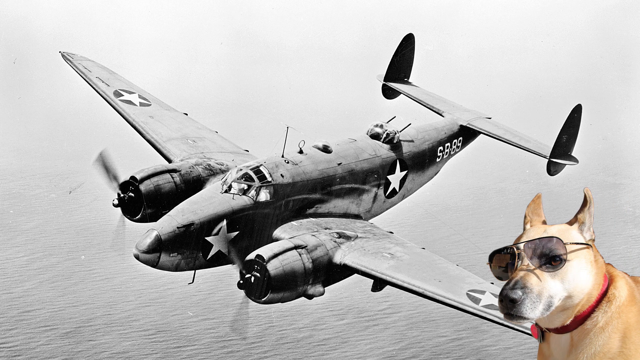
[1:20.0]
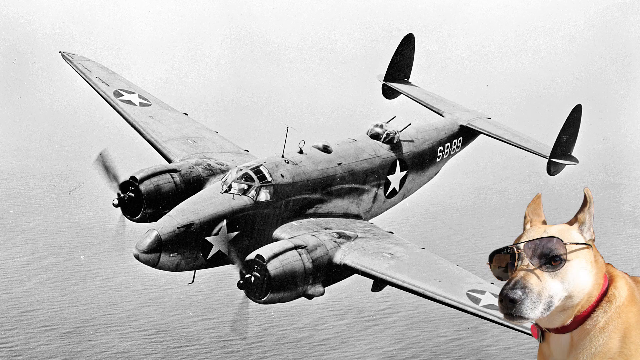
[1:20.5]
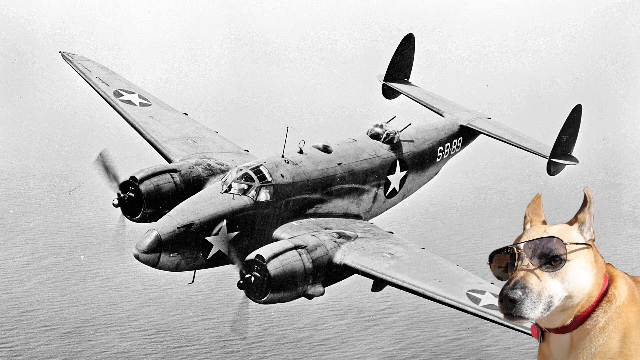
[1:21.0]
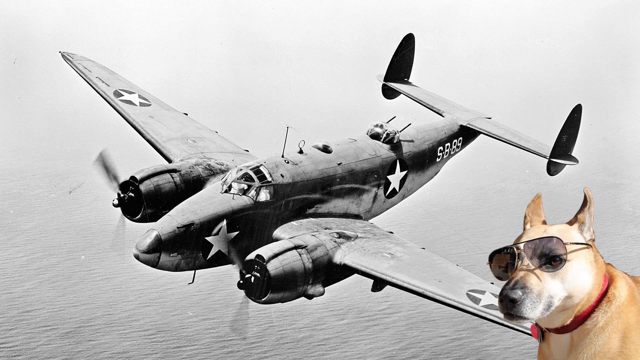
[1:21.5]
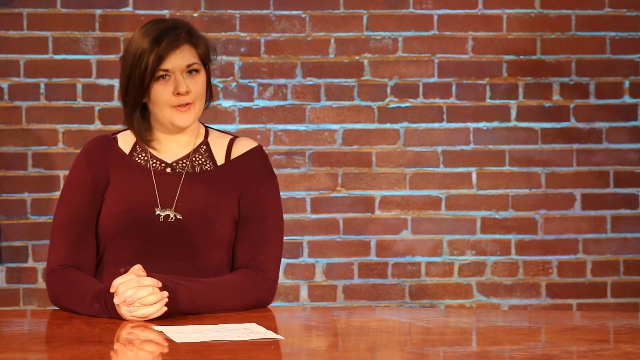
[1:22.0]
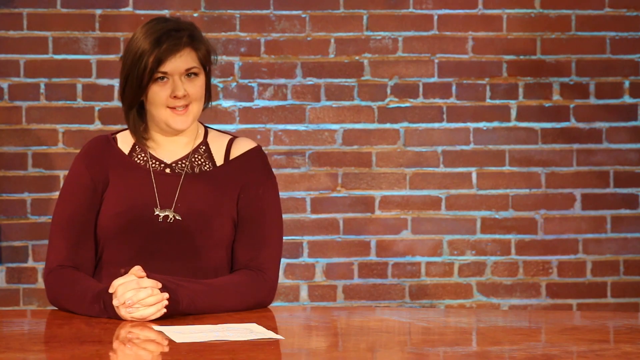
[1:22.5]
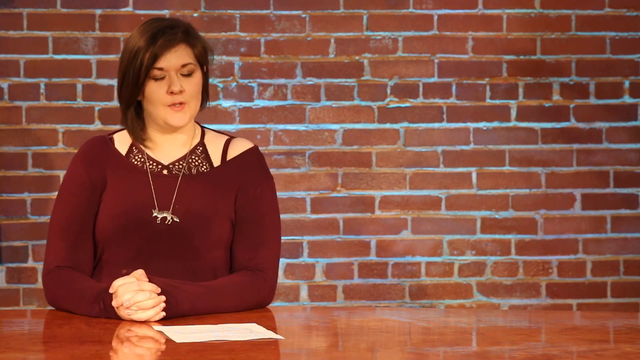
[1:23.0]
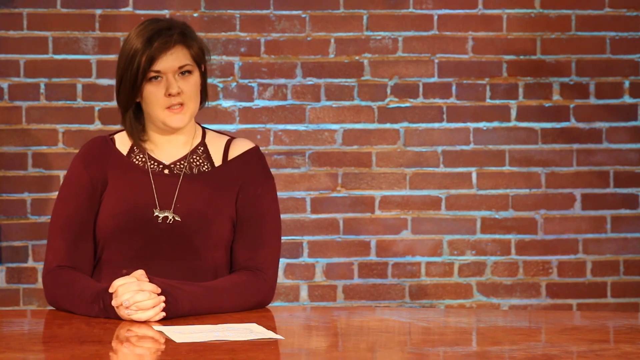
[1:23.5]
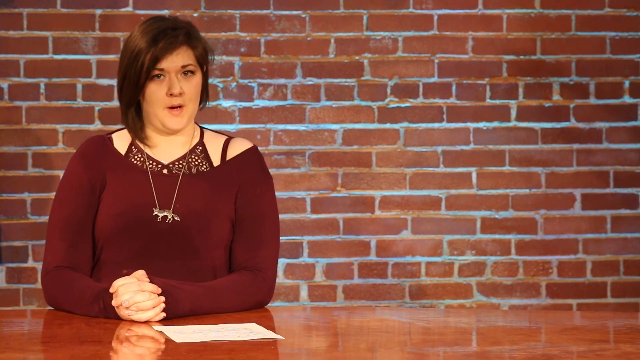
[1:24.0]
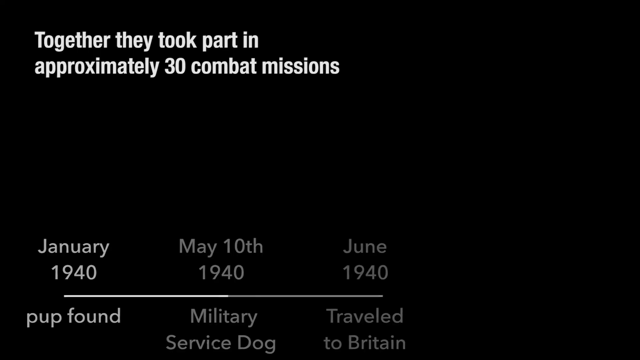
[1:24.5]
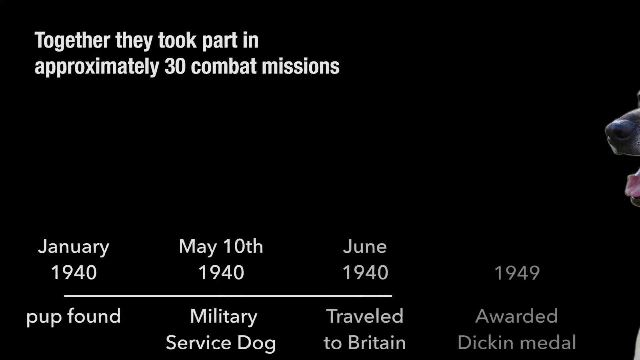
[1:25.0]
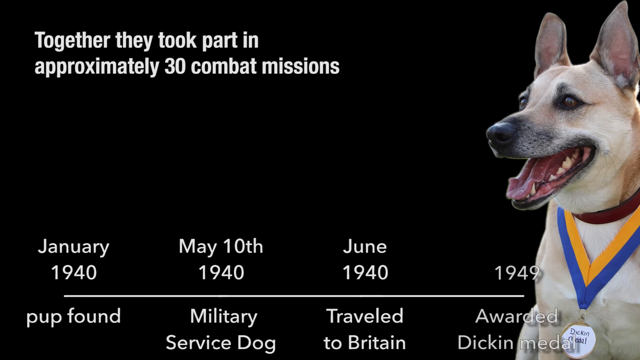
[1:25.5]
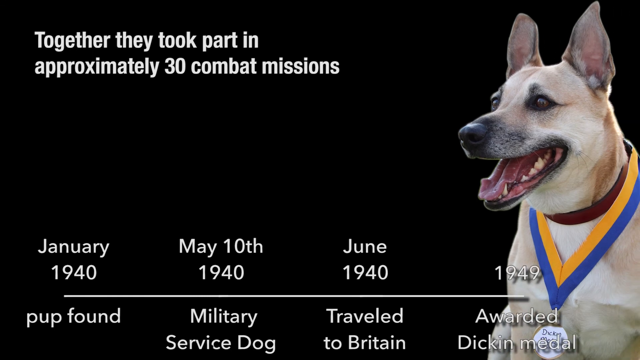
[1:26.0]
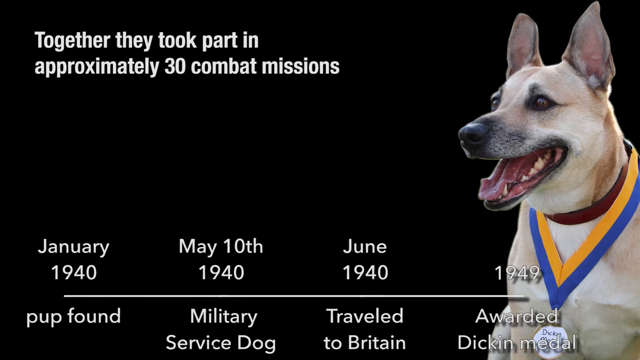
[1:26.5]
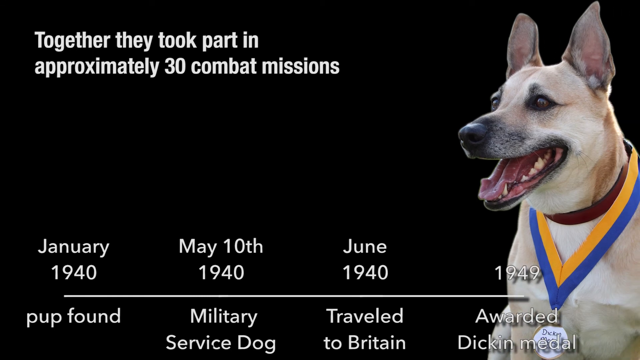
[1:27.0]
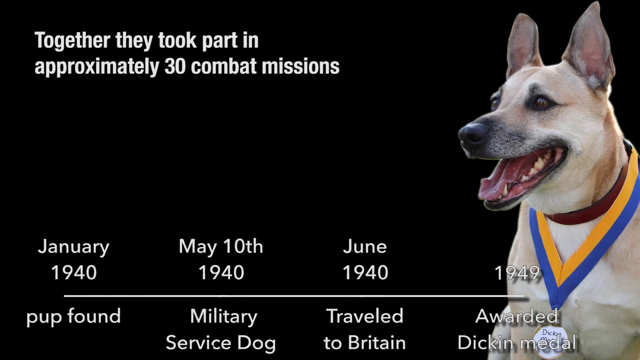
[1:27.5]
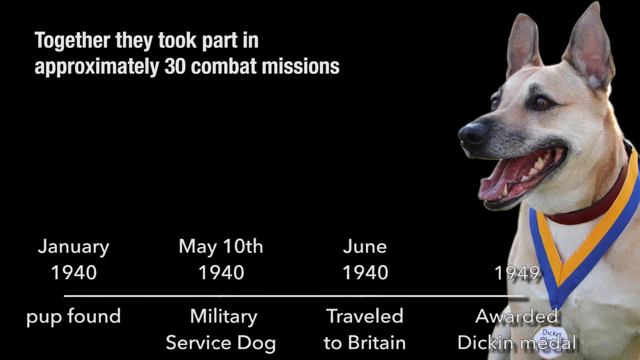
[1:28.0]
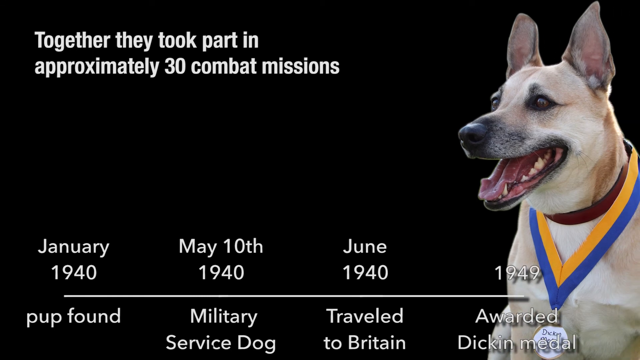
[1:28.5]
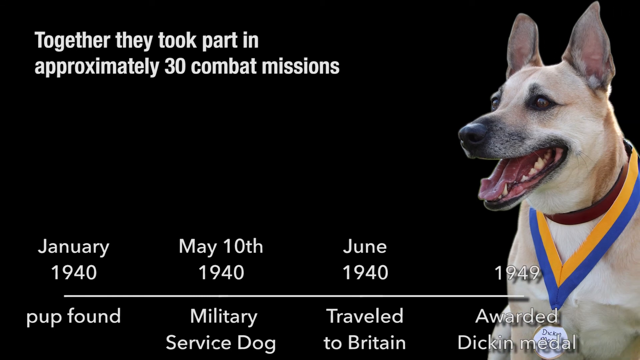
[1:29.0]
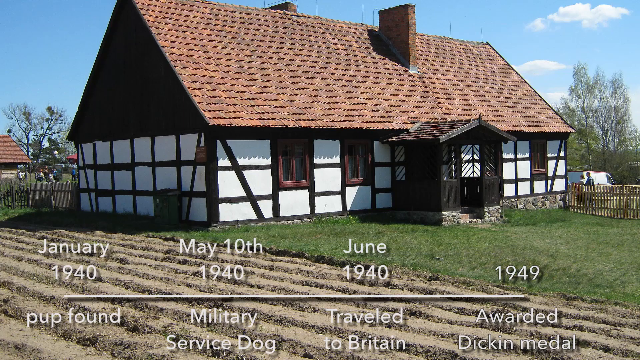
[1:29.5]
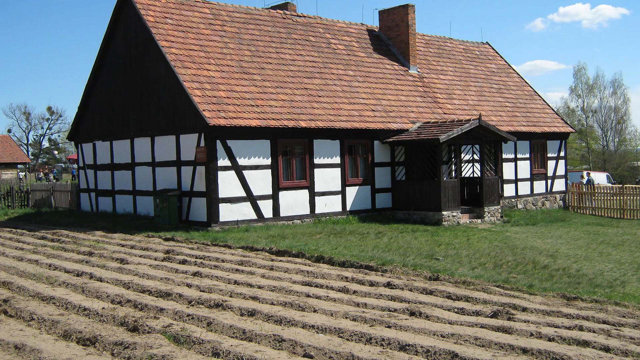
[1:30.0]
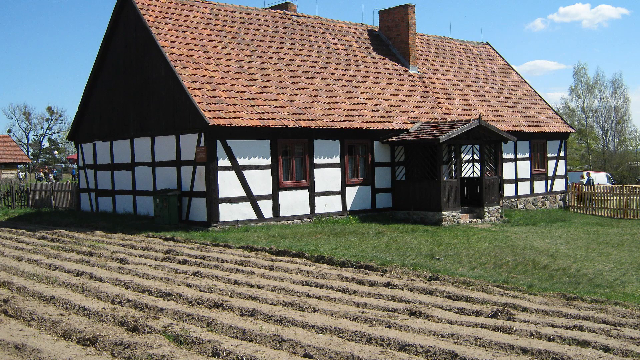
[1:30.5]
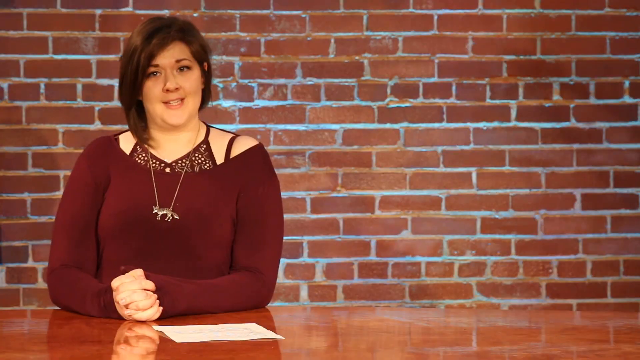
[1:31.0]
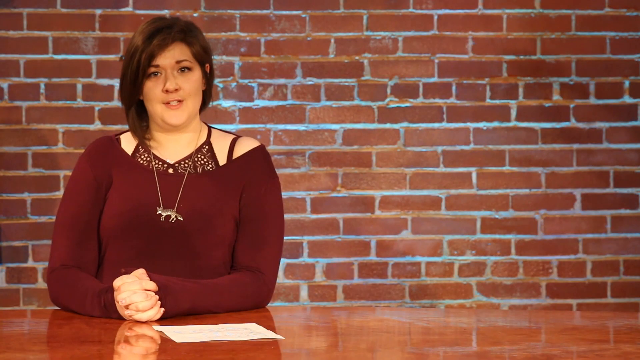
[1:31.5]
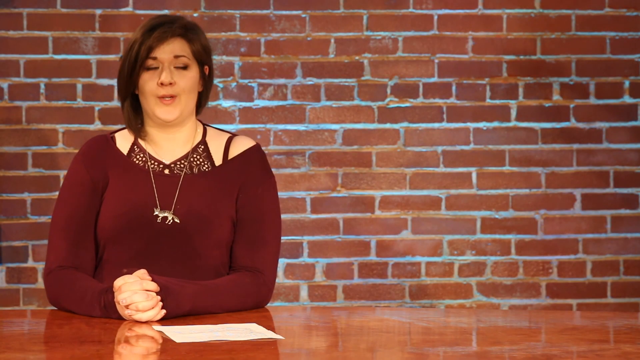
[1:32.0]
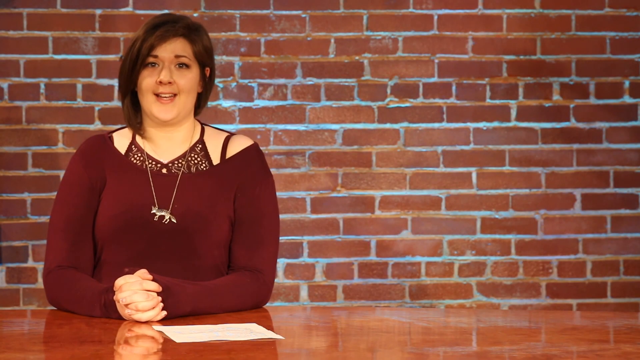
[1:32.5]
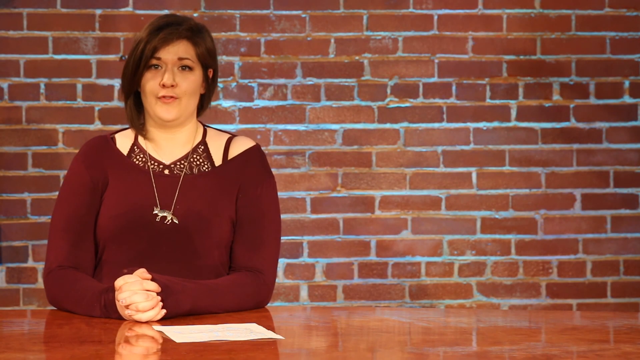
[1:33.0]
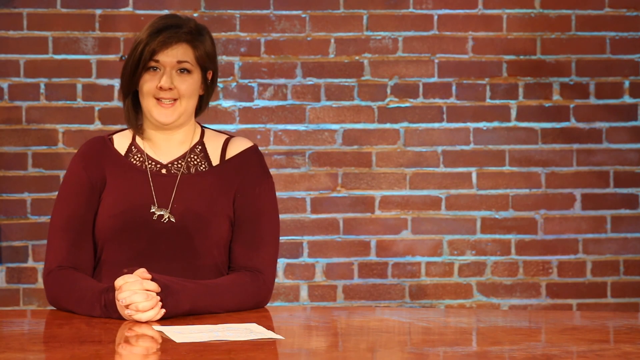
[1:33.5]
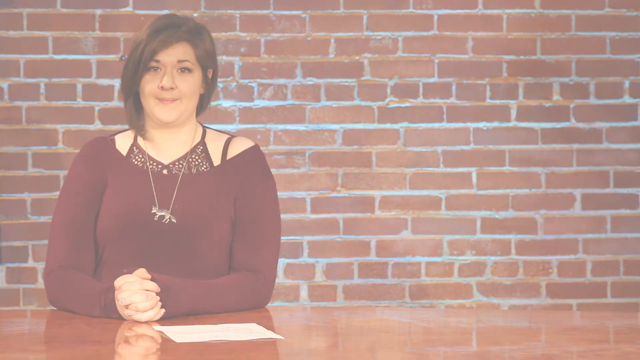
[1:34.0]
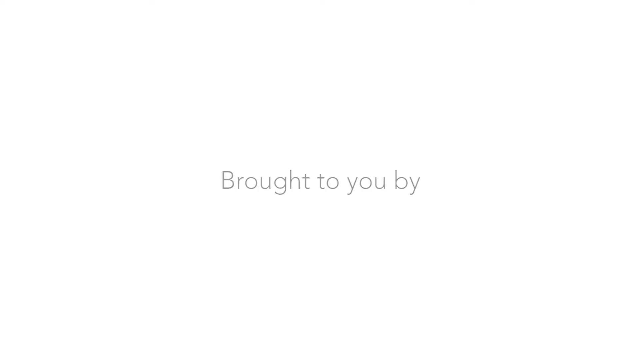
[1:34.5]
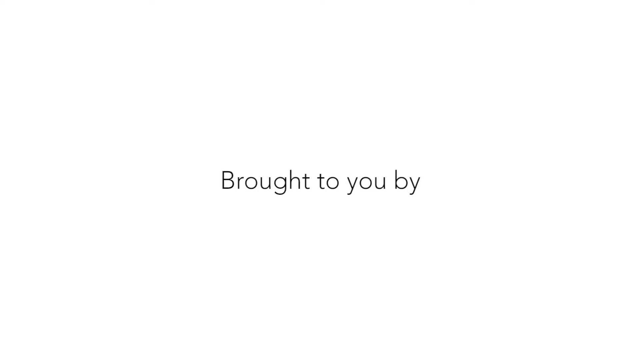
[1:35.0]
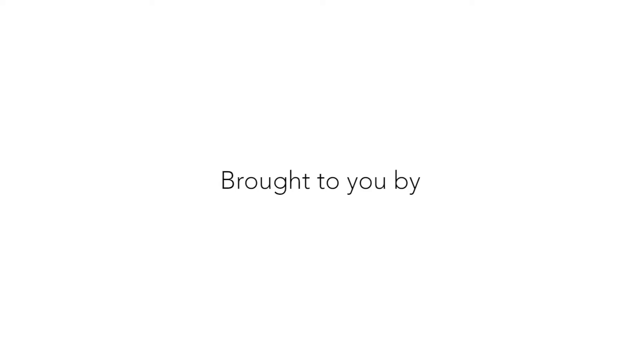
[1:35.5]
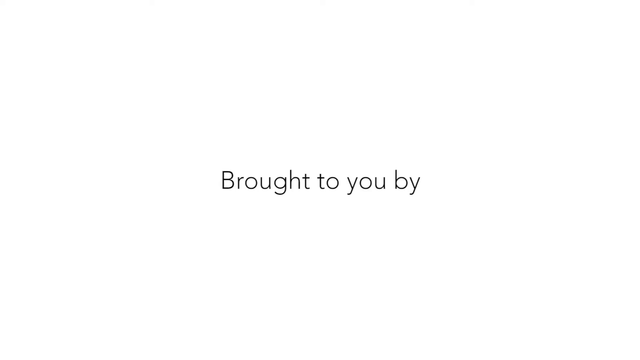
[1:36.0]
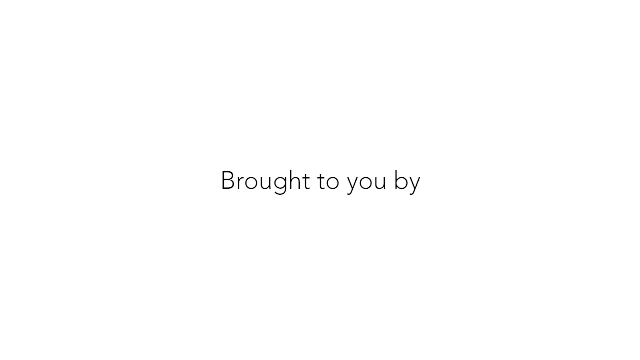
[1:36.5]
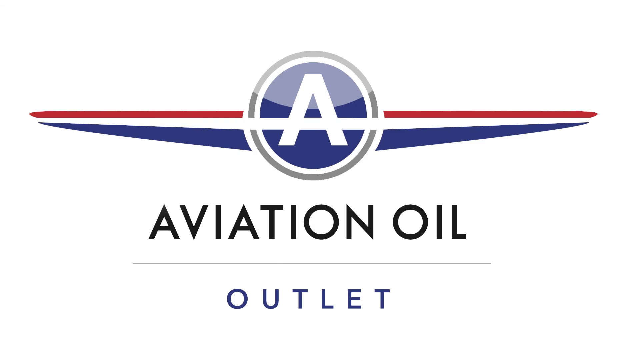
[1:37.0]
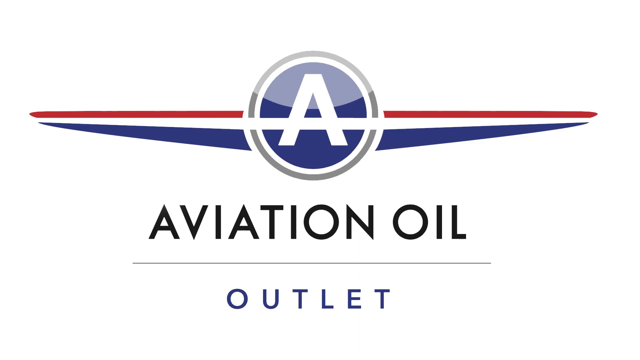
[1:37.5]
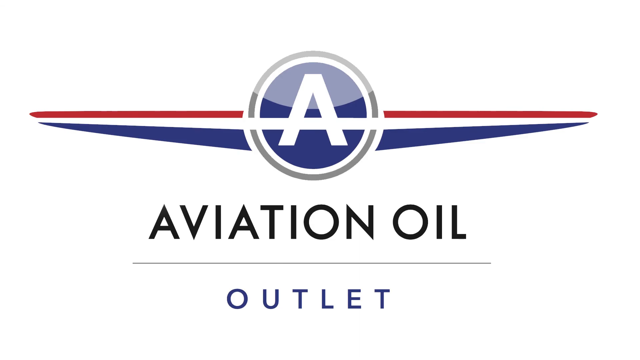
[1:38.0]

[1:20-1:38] An airplane flies in the sky over water, with letters and numbers on the back that say "SB 89." A kind of big, tan dog wearing sunglasses is in the lower right-hand corner. A timeline runs along the bottom of the screen, and at the top text says "together, they took part in approximately 30 combat missions." The timeline shows January 1940, when the pup was found; May 10th, 1940, with the military; June 1940, "traveled to Britain"; and 1949, when the dog was awarded a Dickin medal. The dog is shown wearing a medal on a blue and yellow ribbon. The woman keeps talking while standing in front of a wall, and text says "brought to you by aviation oil outlet," with a capital A in the middle and red, white and blue wings coming out of its sides.